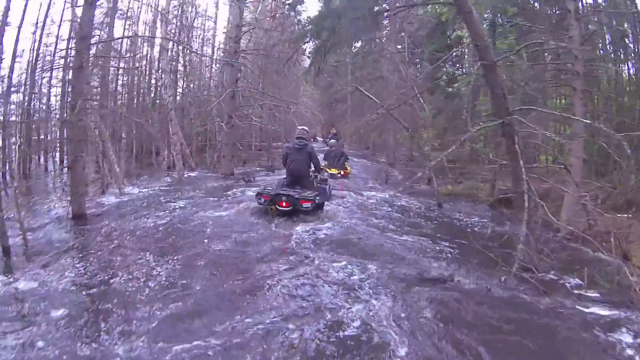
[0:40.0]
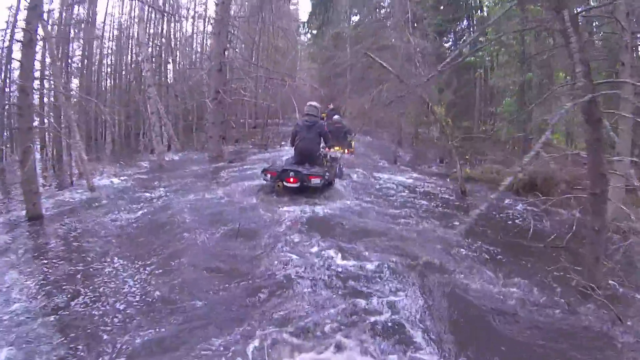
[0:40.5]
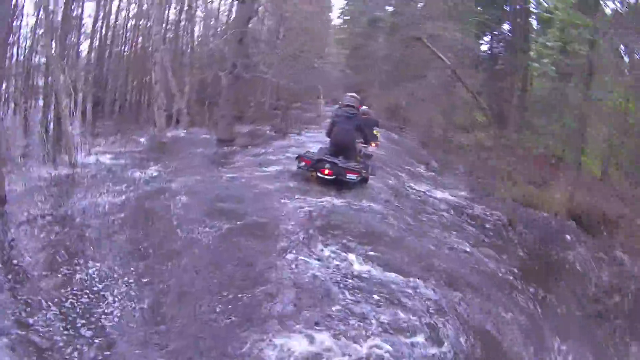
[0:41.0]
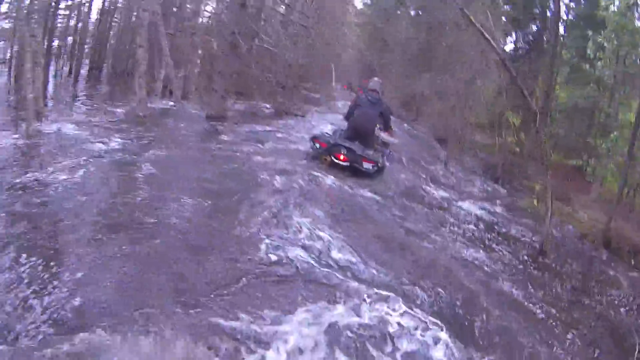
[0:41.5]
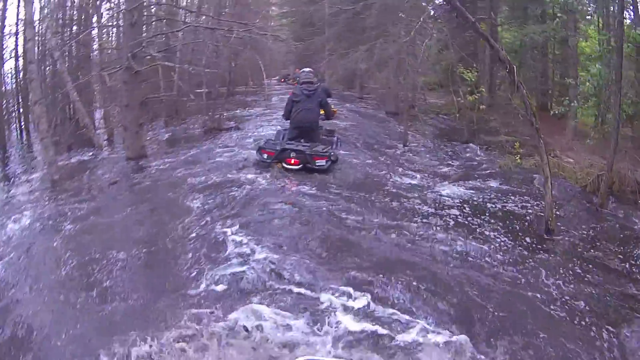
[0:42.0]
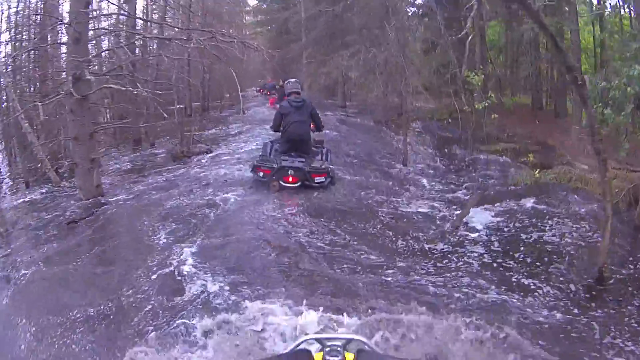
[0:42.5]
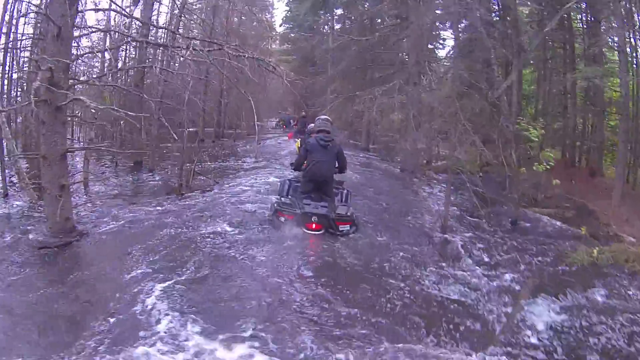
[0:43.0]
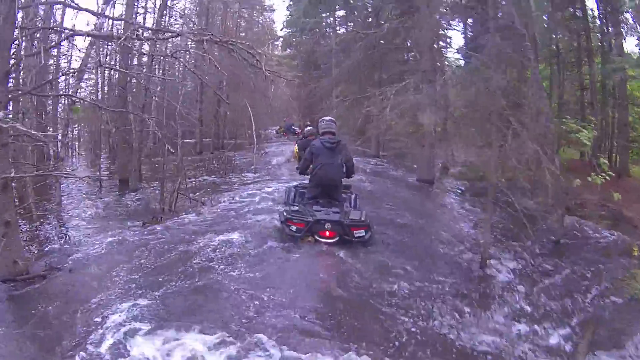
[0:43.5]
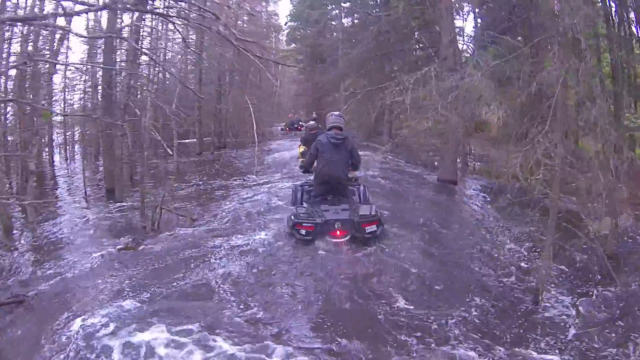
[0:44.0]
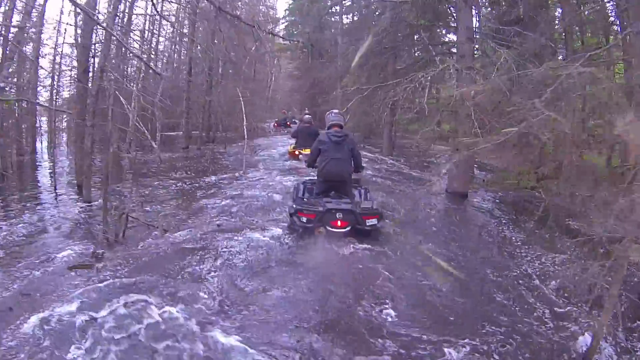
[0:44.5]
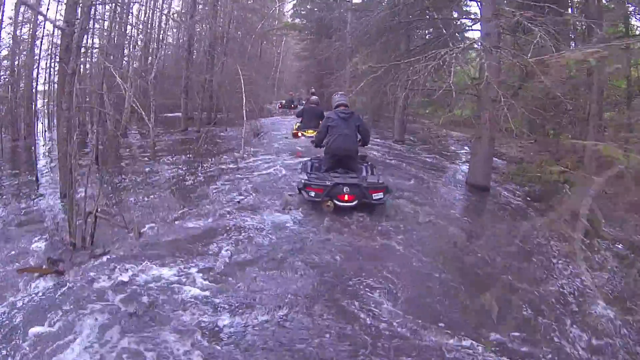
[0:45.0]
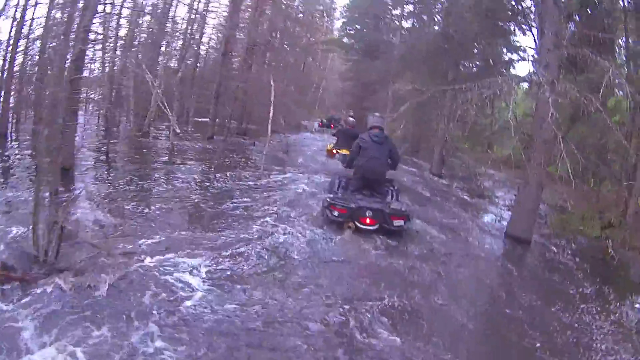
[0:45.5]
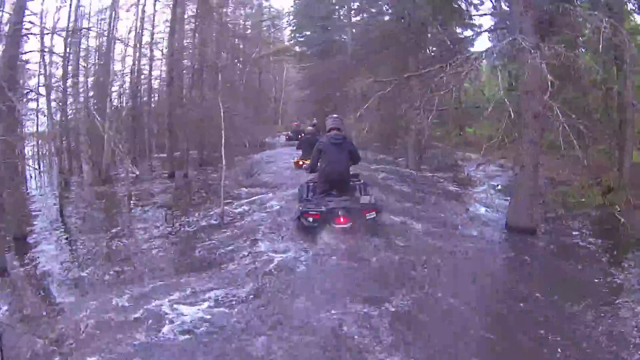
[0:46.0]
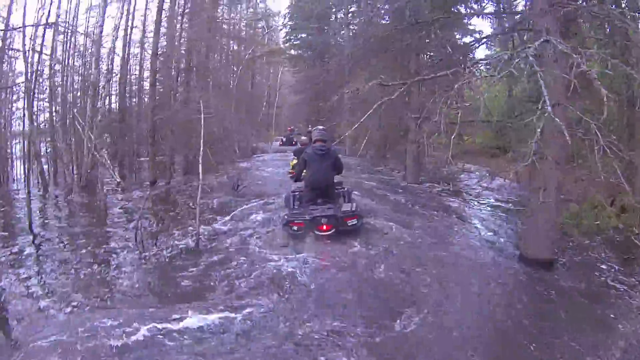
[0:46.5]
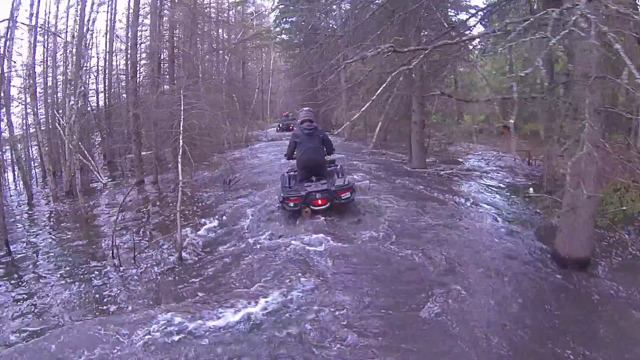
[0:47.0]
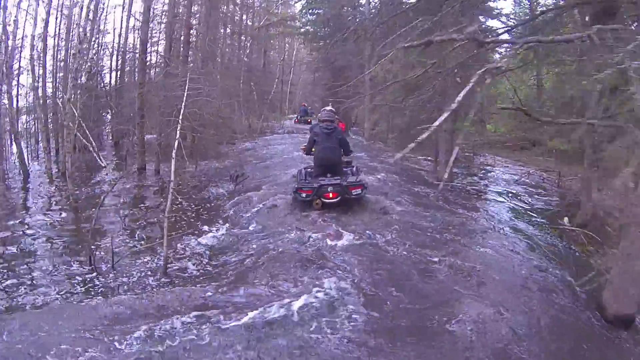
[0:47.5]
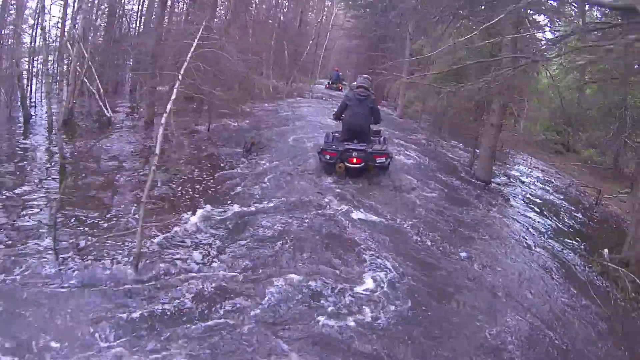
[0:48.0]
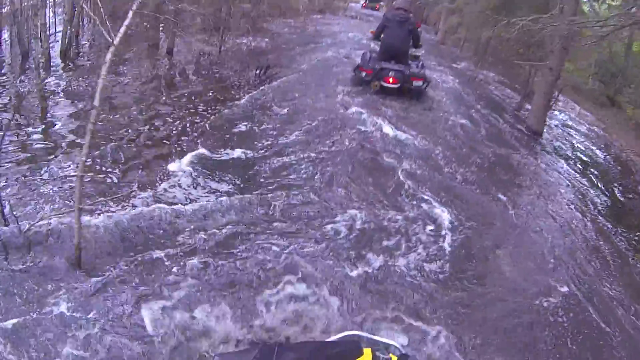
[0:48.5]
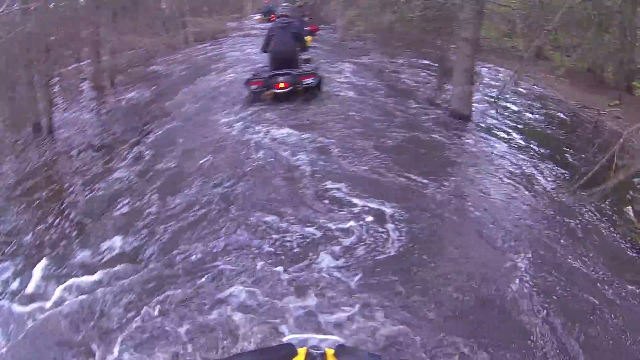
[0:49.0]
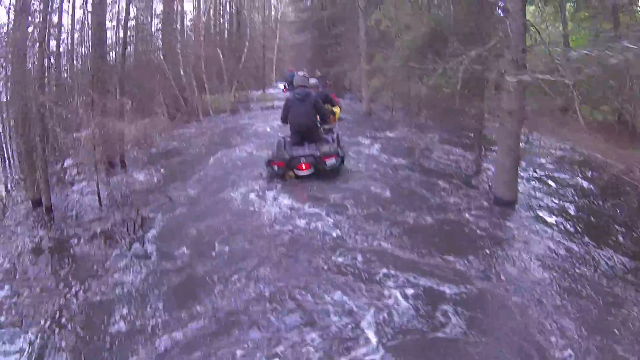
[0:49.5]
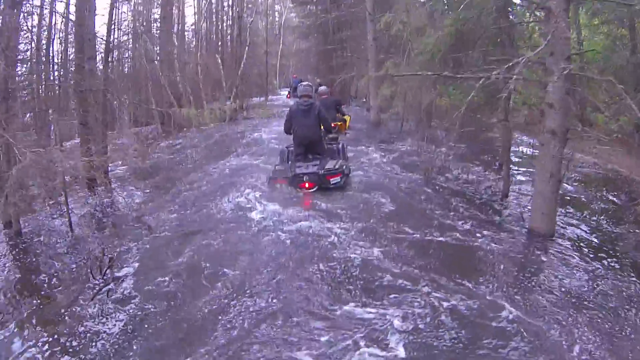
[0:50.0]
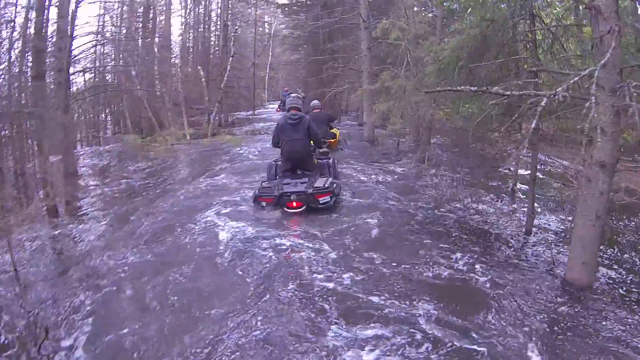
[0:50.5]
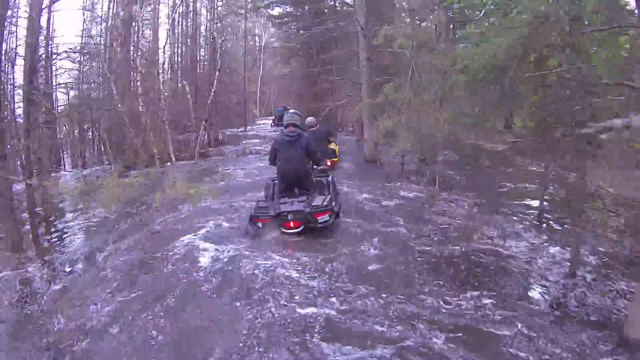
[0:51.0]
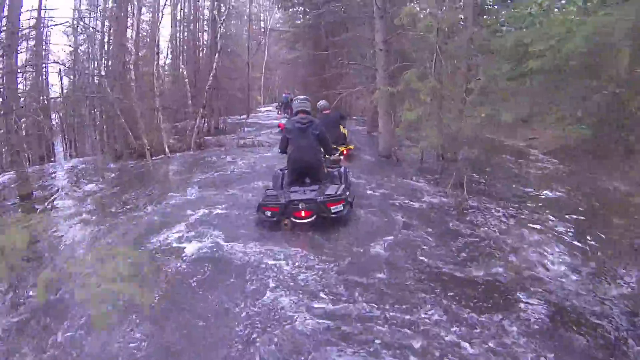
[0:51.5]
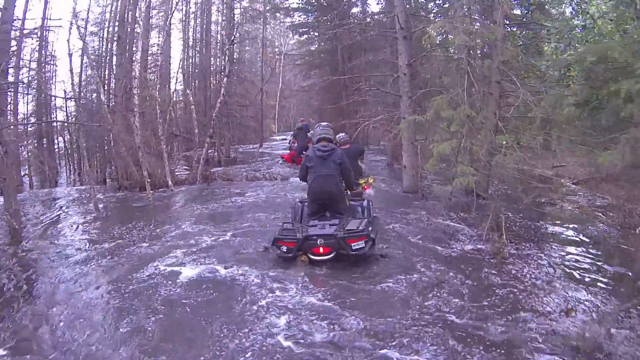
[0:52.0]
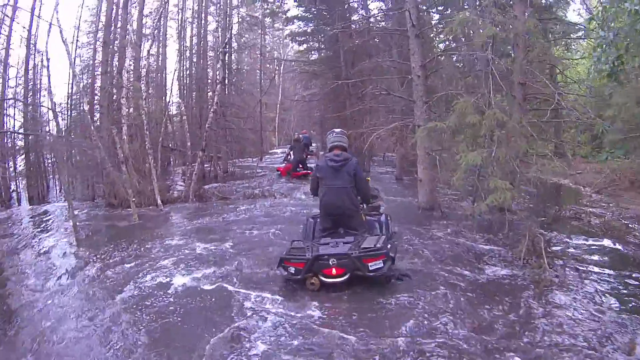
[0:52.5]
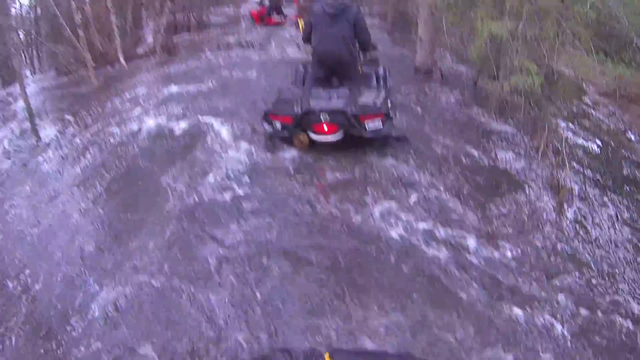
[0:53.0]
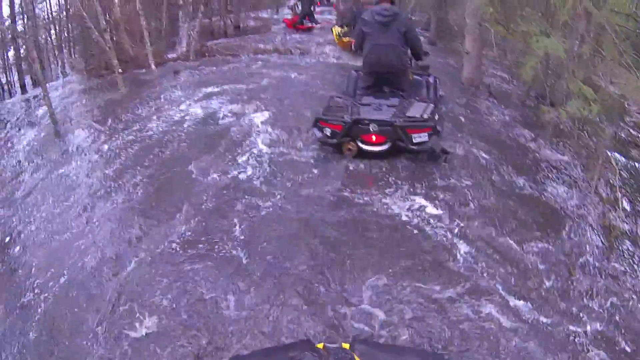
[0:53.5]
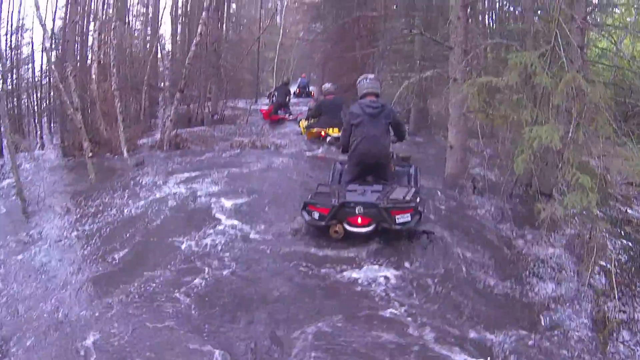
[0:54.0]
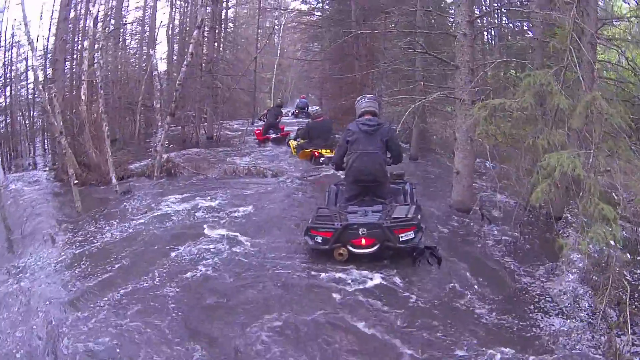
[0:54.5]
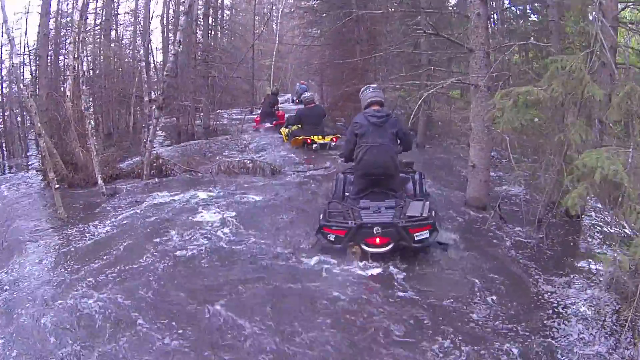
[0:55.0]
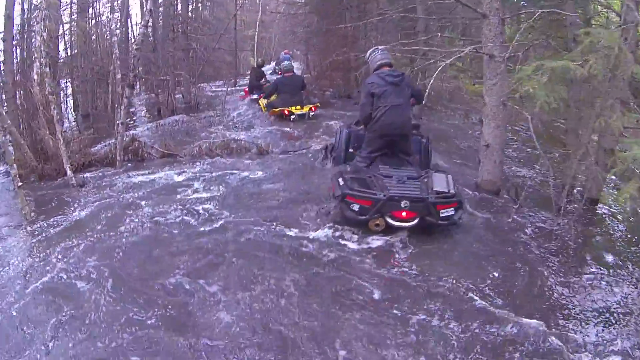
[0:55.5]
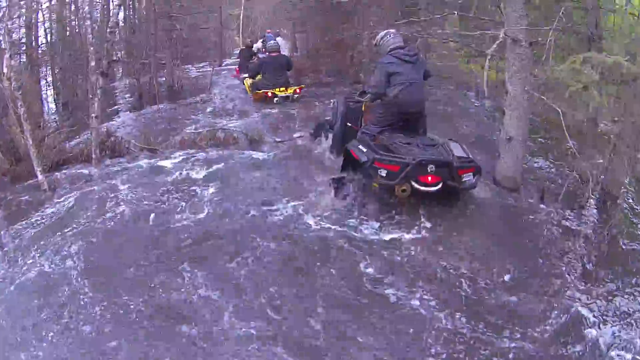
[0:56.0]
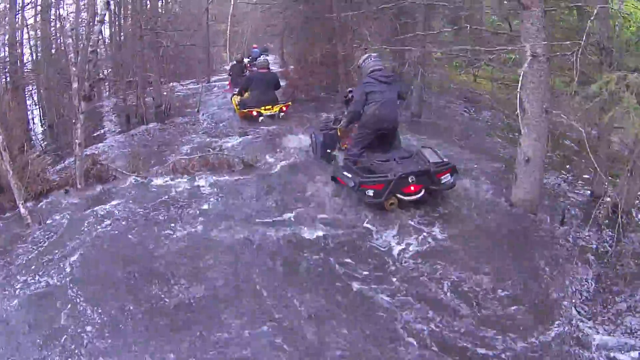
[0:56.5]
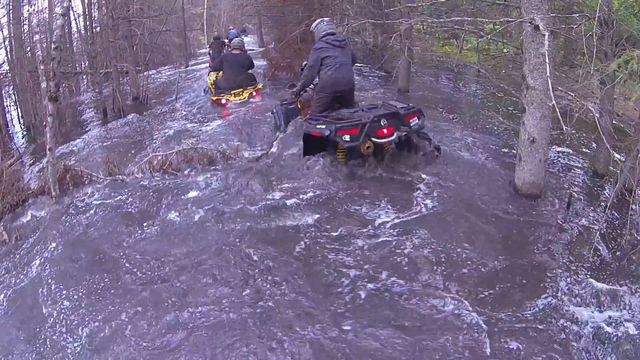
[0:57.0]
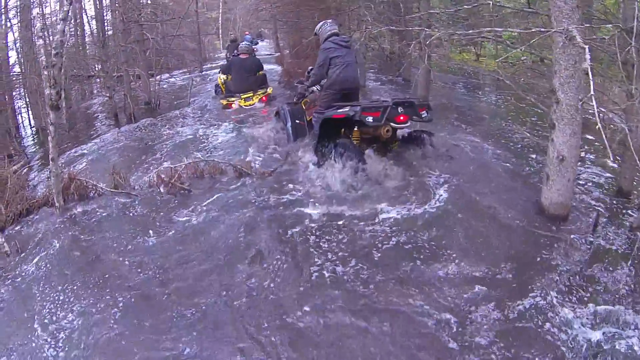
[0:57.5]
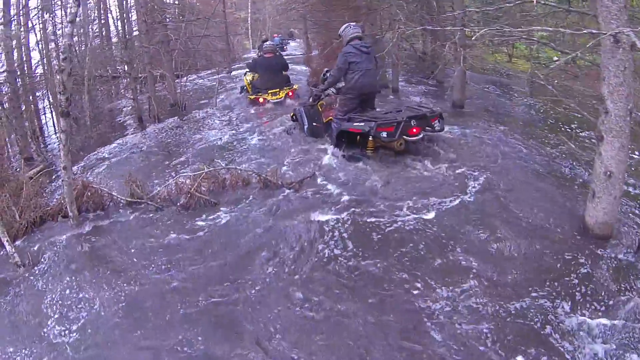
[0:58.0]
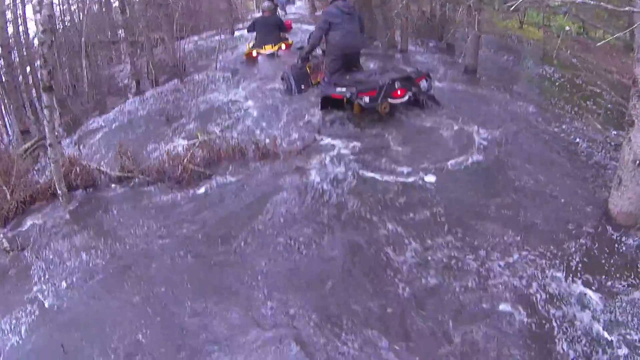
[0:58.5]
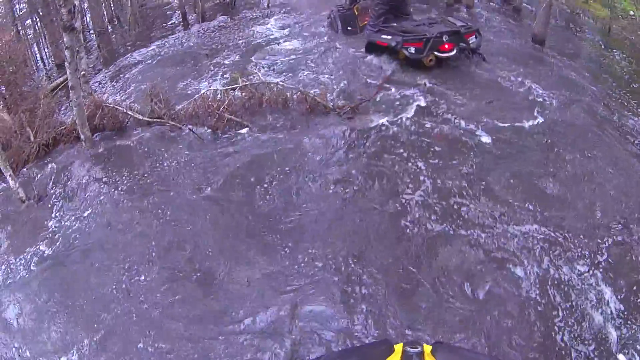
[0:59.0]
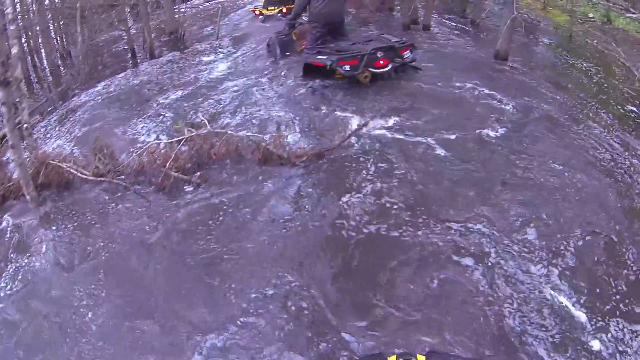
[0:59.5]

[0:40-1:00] The area was clearly a pedestrian area. The riders seem to struggle quite a bit over some sections, with debris in the middle of the flooded path, which seems to go on and on. The water is very dark brown. They do not look like they are having fun and go pretty slowly. The weather looks quite cloudy. The trees are kind of halfway covered by water. They slow down at a fork in the path, look at each other and in different directions, seemingly unsure where to go. There is a lot in the way. The water is moving pretty quickly, leading them along. It looks like a swamp around them, with trees sticking out. They are wearing coats and hats.